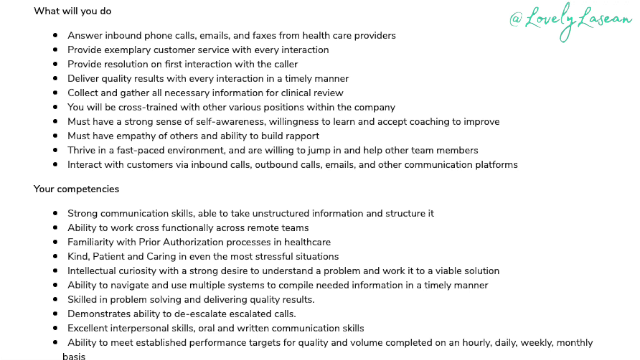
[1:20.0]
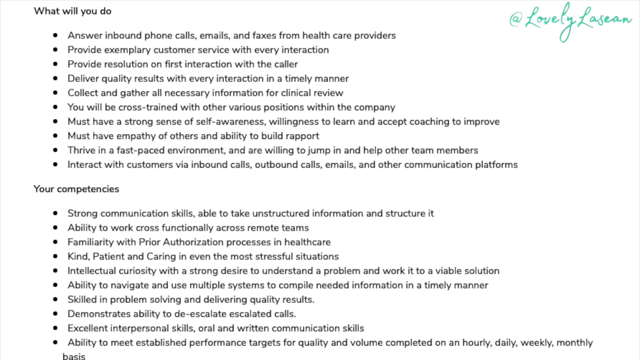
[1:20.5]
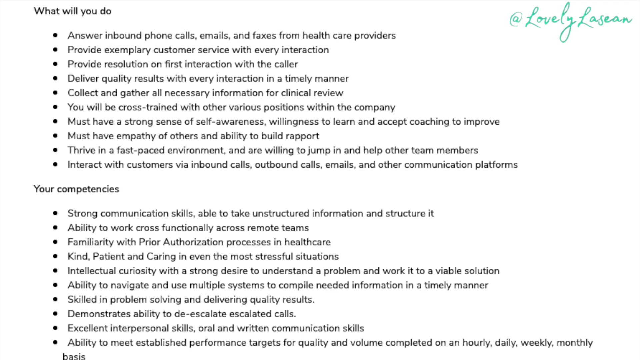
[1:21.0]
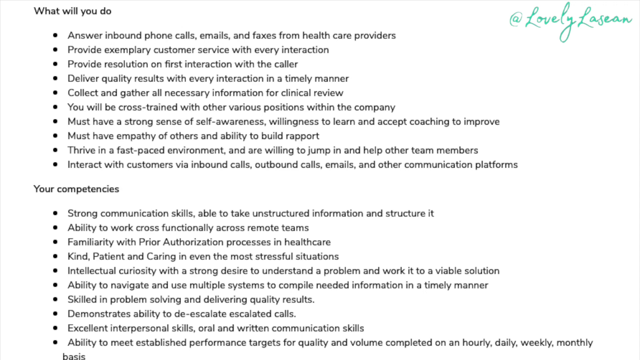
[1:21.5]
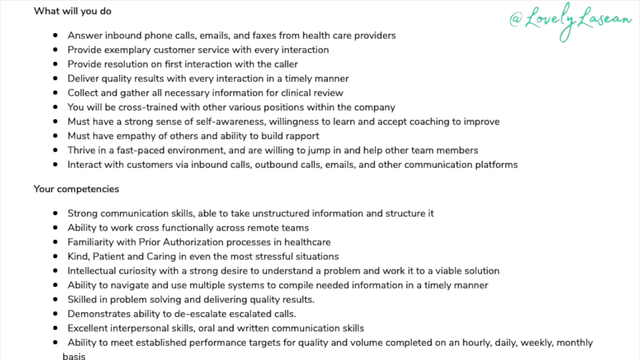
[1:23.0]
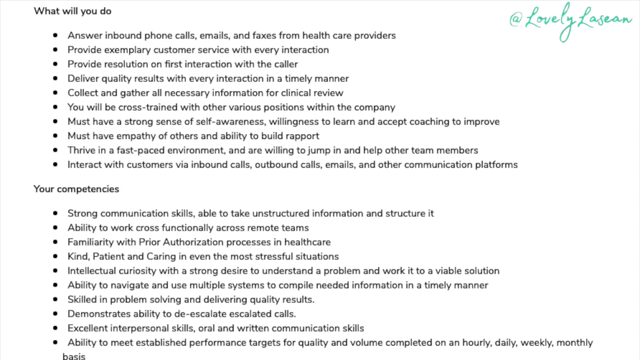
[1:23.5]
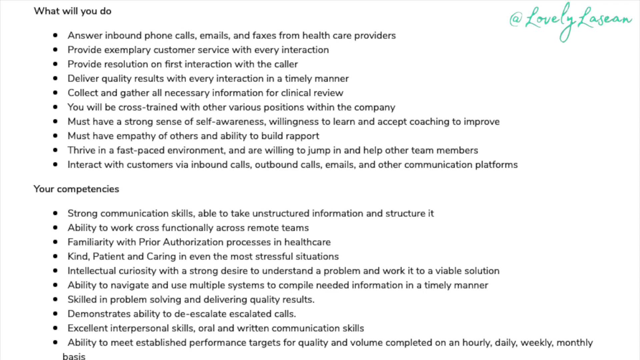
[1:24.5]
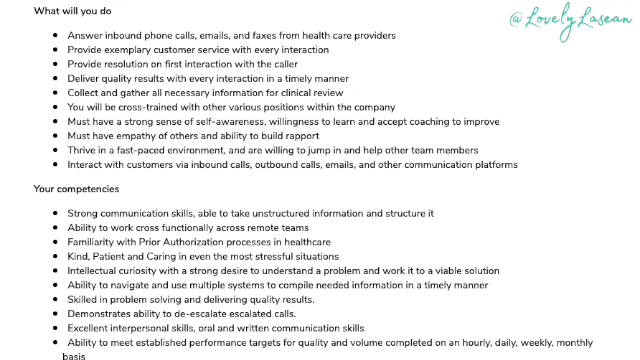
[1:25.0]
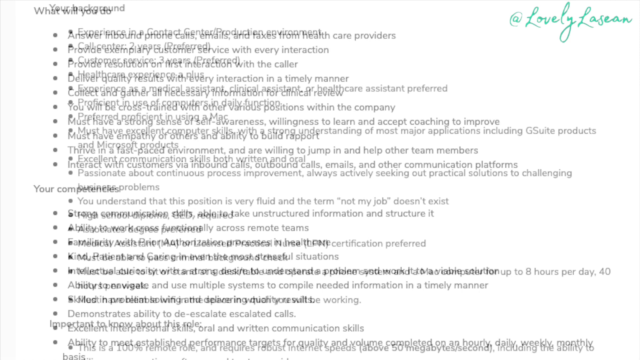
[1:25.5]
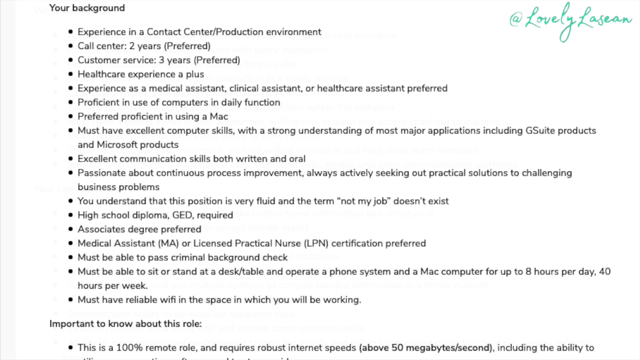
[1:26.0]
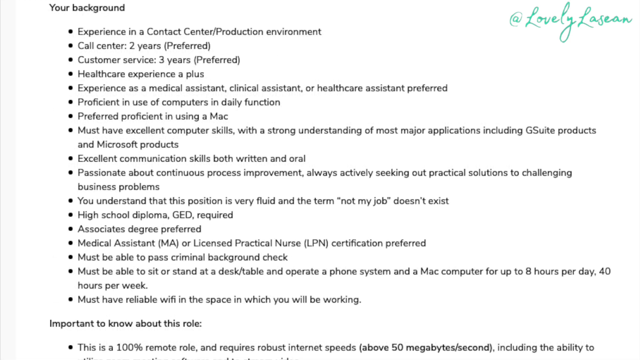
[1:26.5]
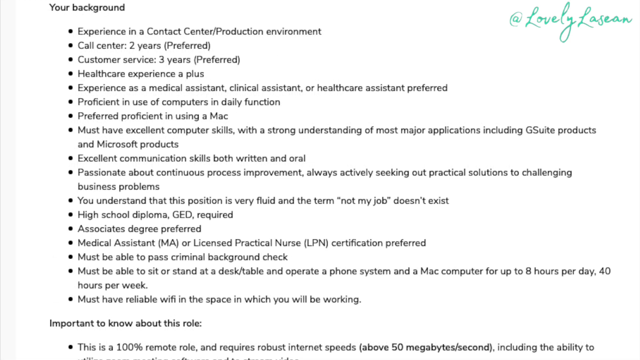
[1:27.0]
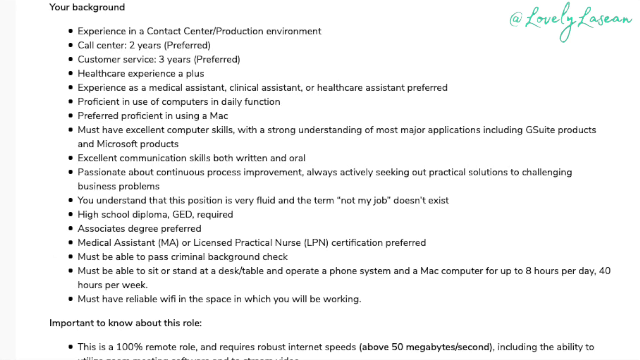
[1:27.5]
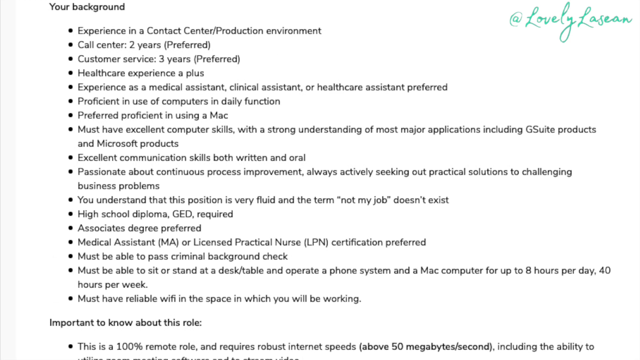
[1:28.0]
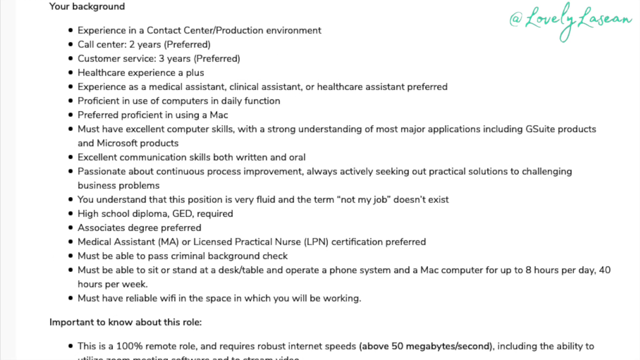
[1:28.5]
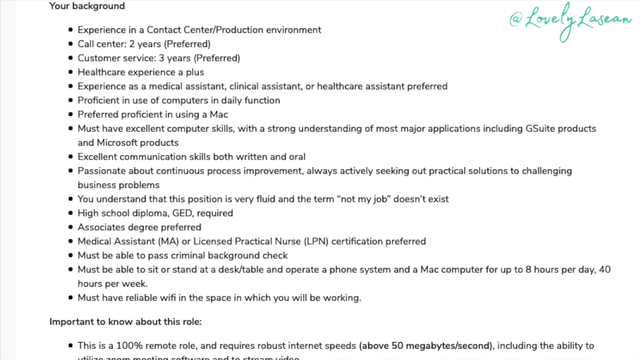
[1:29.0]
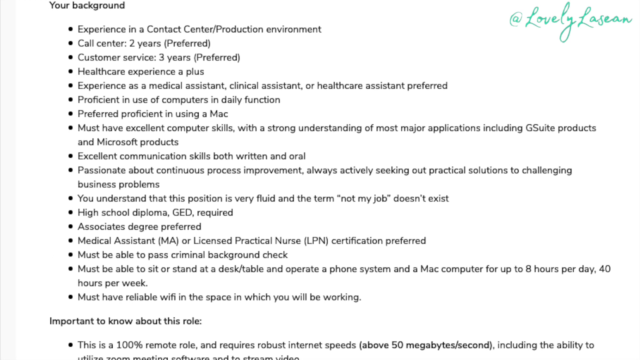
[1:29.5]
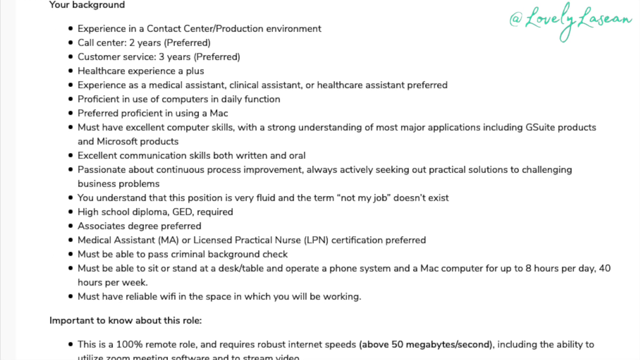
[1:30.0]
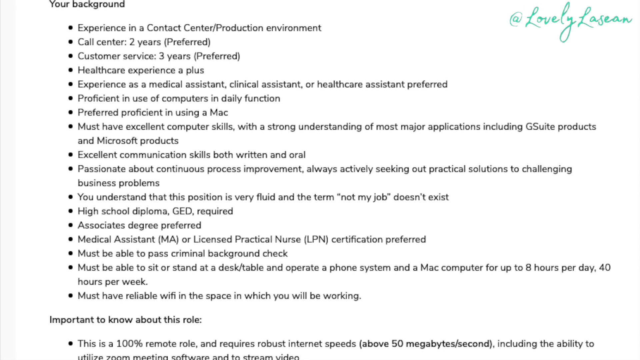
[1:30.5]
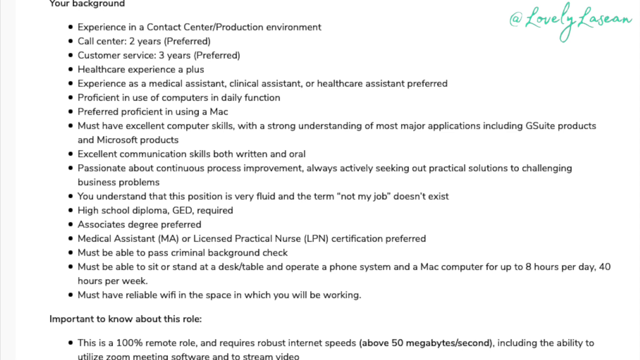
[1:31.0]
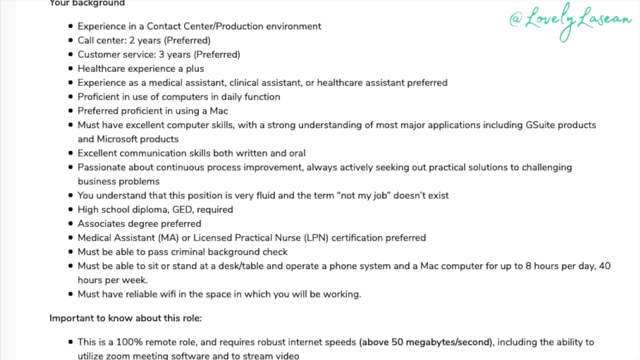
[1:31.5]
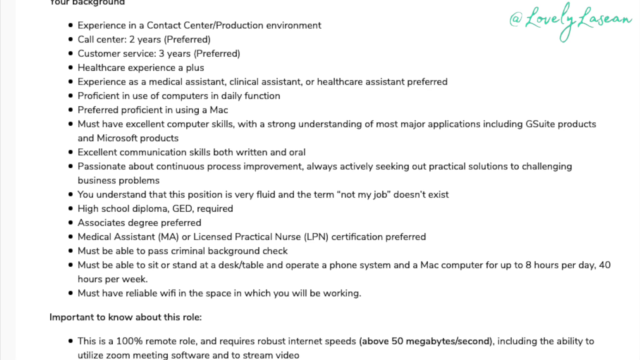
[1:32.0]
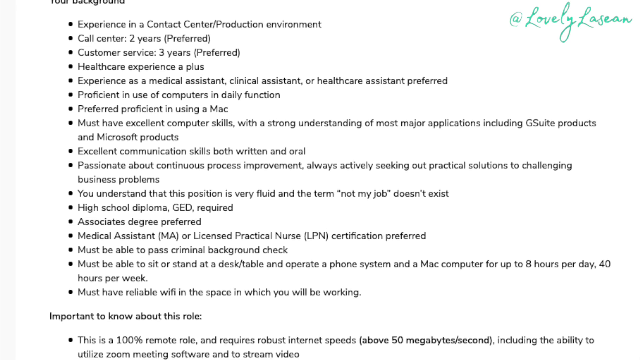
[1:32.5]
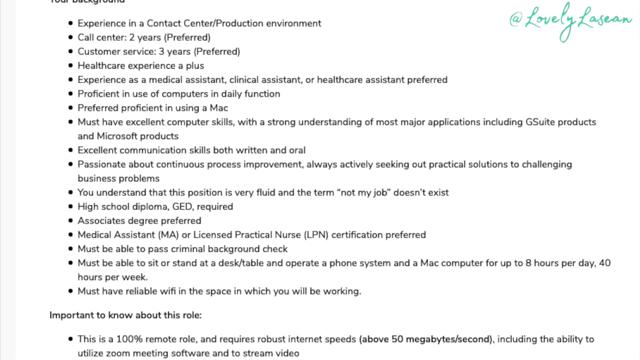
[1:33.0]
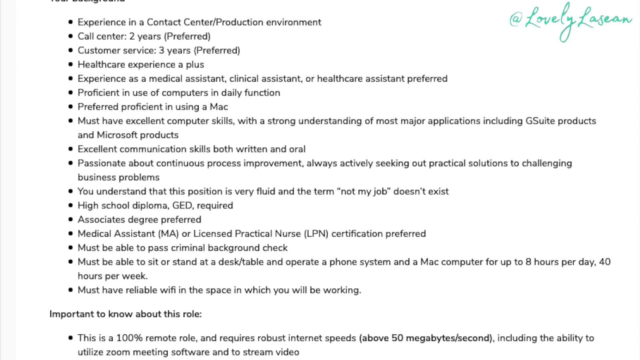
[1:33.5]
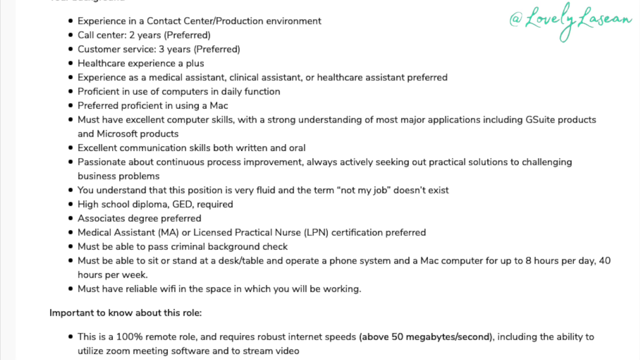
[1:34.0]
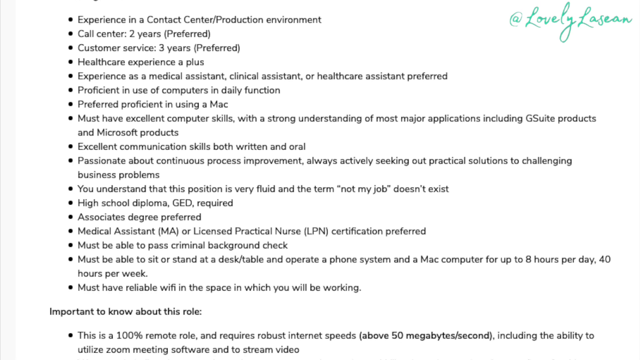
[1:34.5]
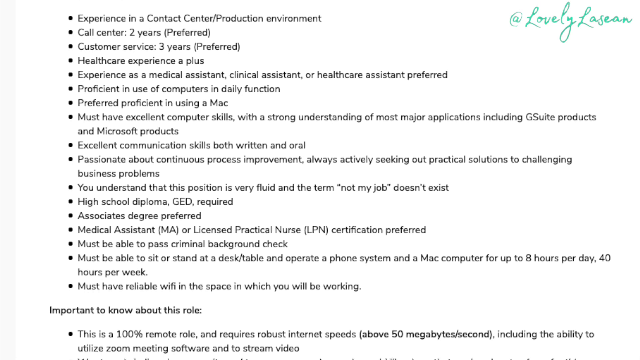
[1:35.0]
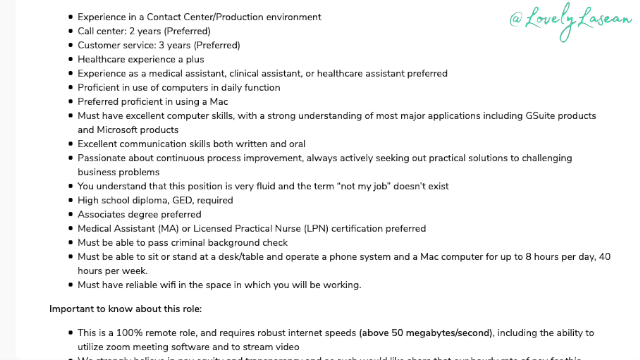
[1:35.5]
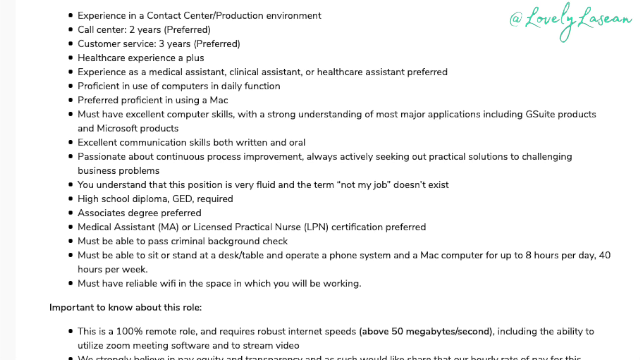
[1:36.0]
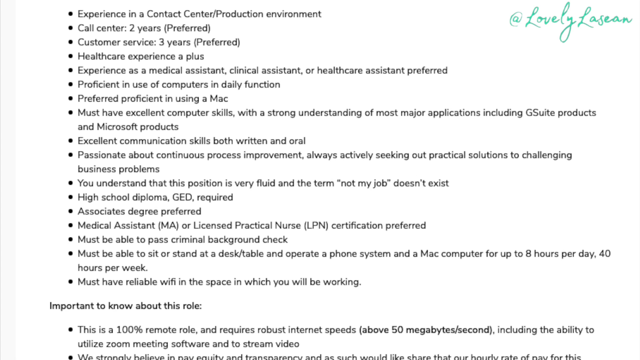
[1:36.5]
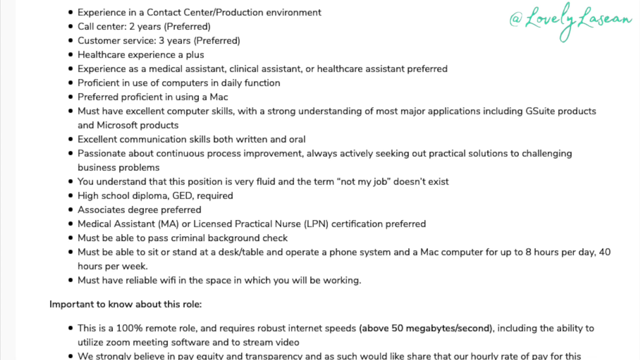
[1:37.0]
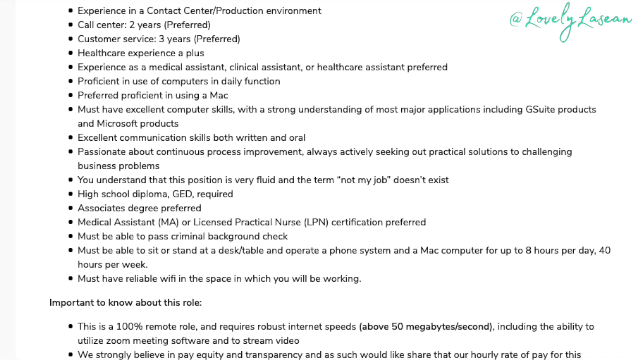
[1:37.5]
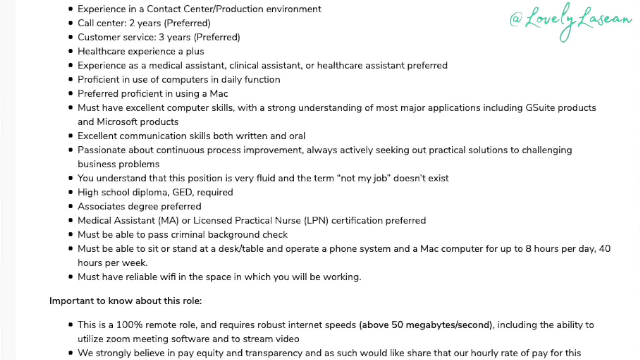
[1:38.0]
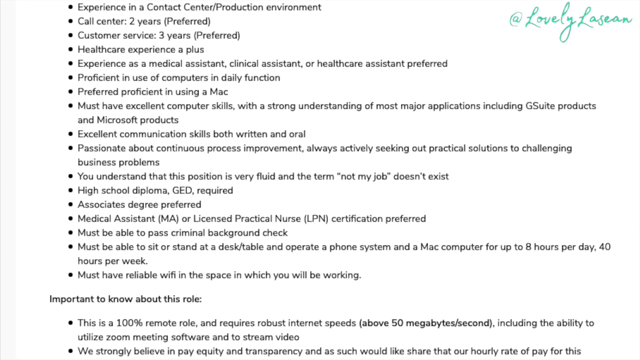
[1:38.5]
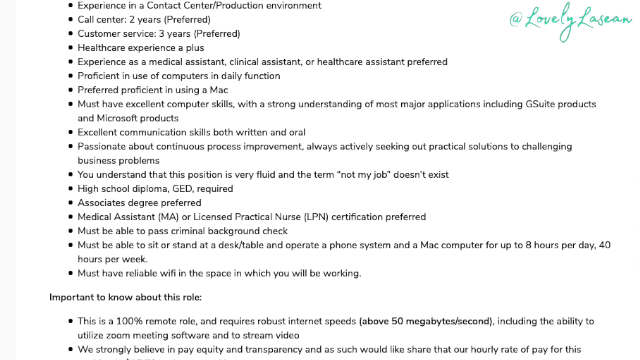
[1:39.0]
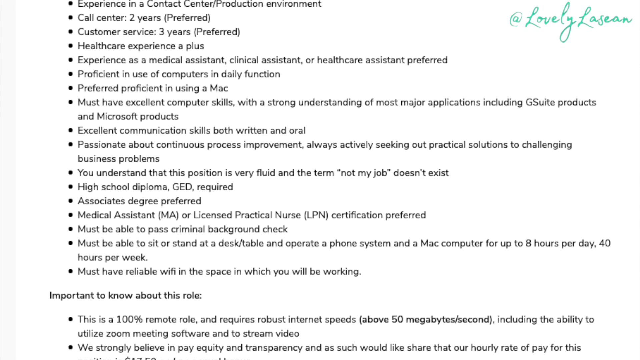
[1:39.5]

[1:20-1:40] A woman appears wearing three different dresses. The ad seems to be for a skincare brand called COHERE. The woman has long hair, a tattoo on her right shoulder and big earrings. She is very cheerful and very active, holding the product in her hand. The next page shows the company's website. On the left side there is a button reading "apply here", and on the other side "intake specialist" is written, apparently a search for a specialist. The following page shows what the person will do, listing all the tasks, followed by "your competencies" and everything they expect.